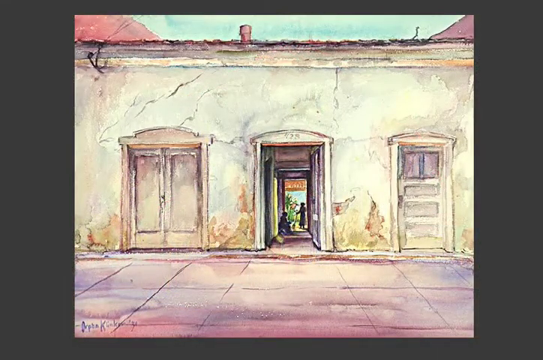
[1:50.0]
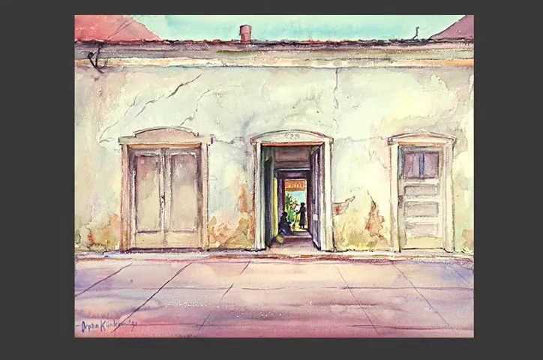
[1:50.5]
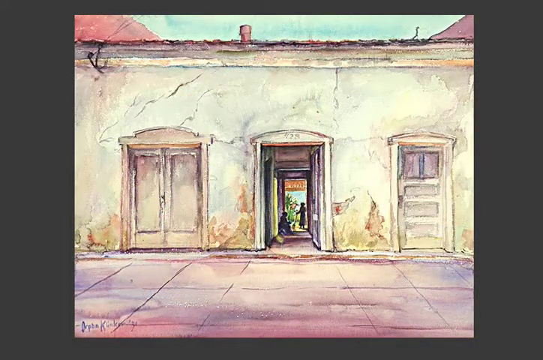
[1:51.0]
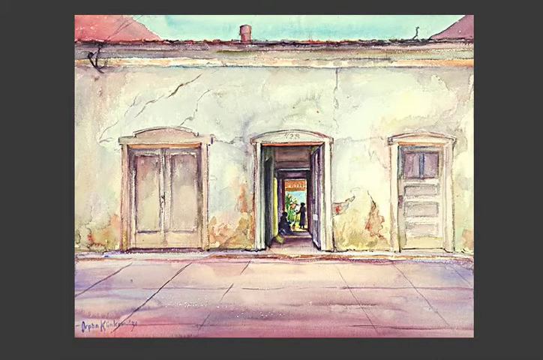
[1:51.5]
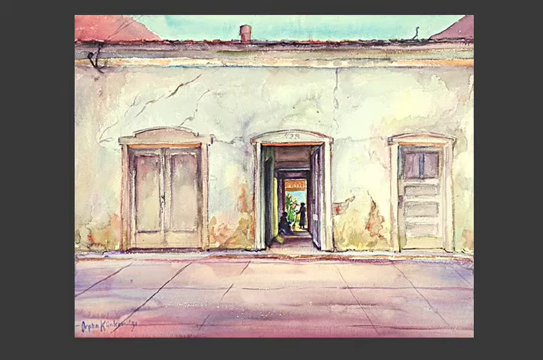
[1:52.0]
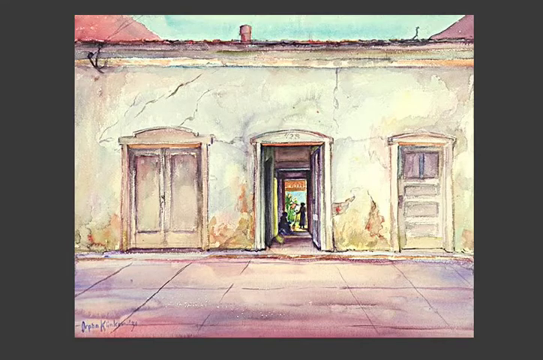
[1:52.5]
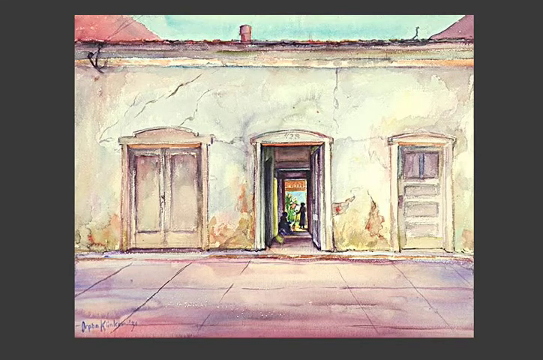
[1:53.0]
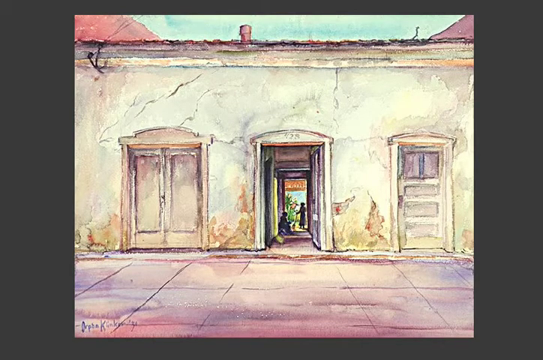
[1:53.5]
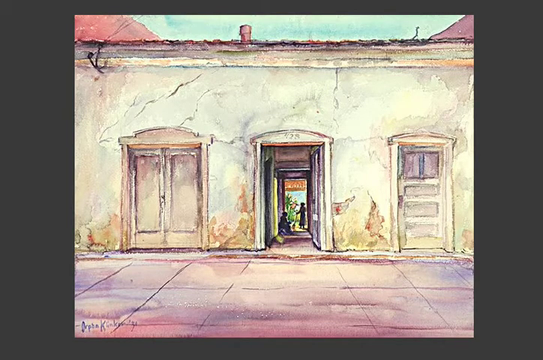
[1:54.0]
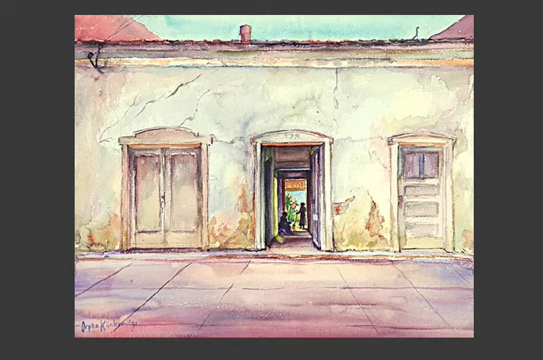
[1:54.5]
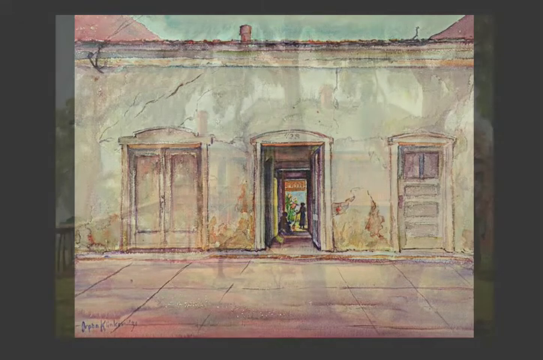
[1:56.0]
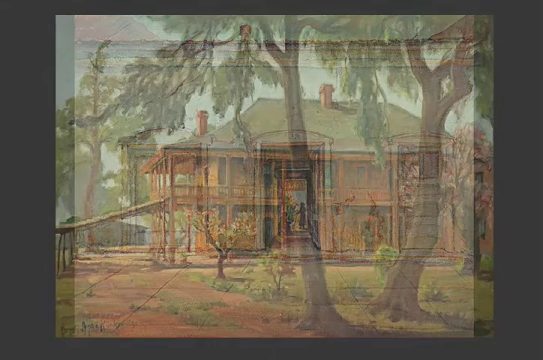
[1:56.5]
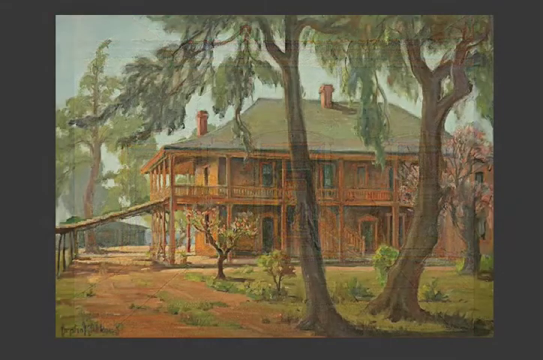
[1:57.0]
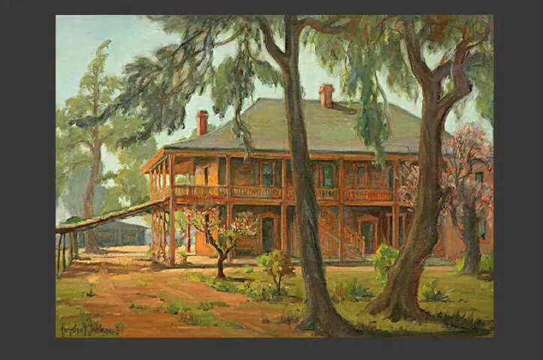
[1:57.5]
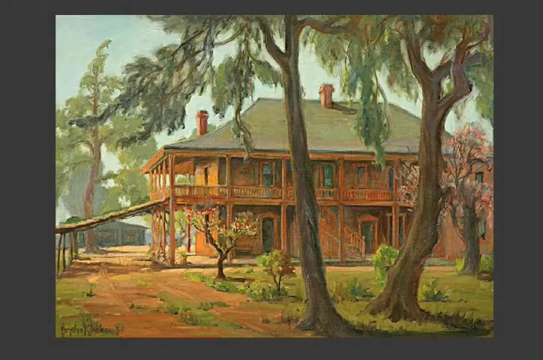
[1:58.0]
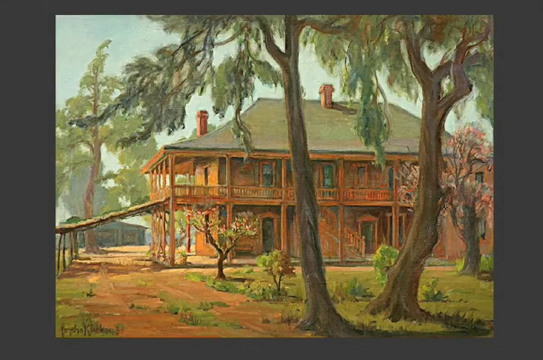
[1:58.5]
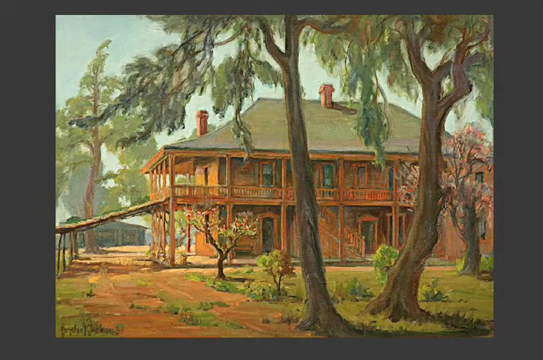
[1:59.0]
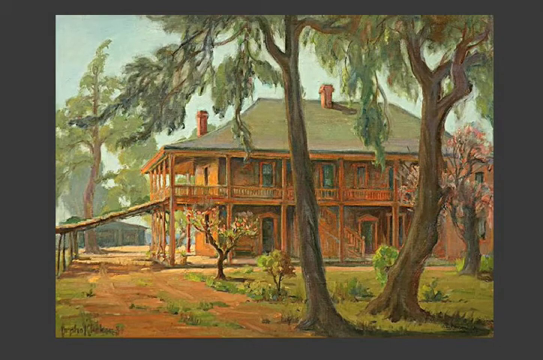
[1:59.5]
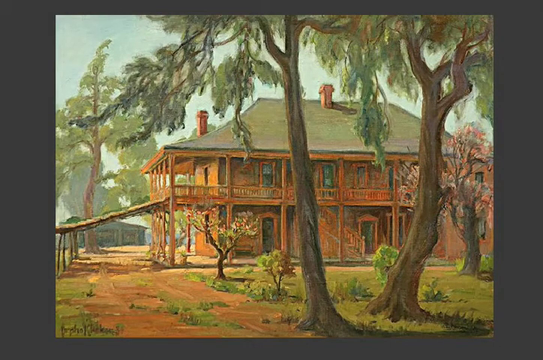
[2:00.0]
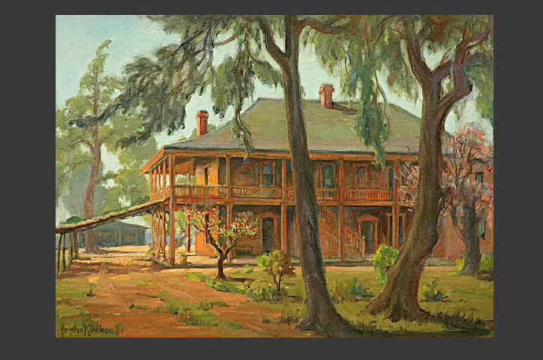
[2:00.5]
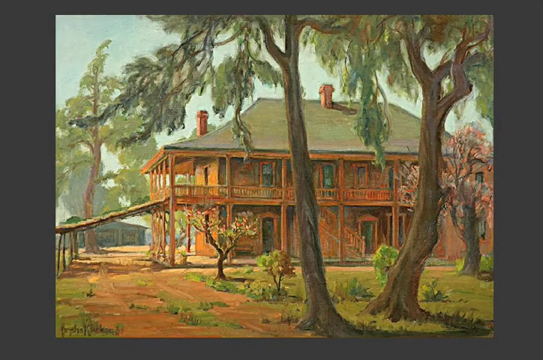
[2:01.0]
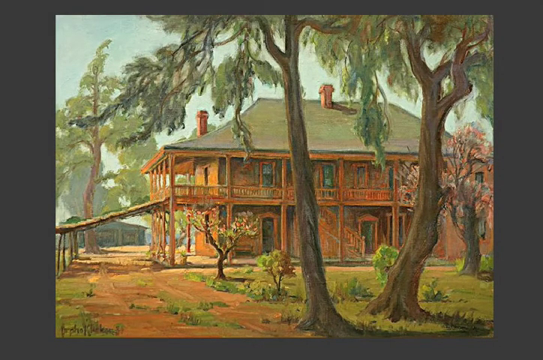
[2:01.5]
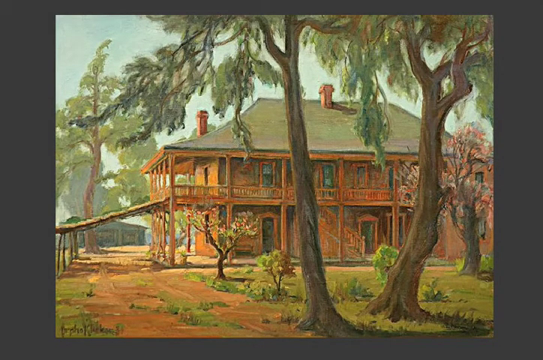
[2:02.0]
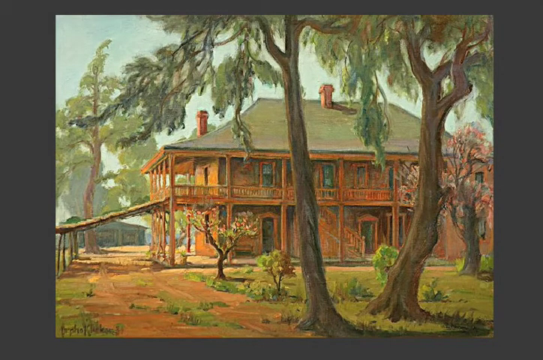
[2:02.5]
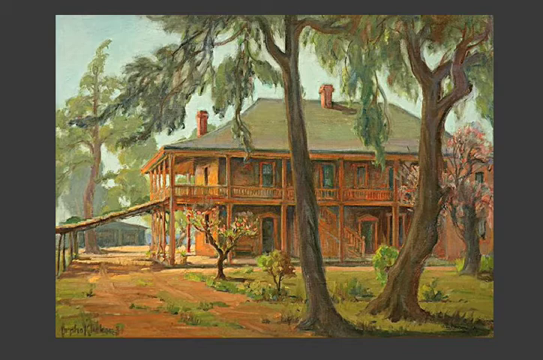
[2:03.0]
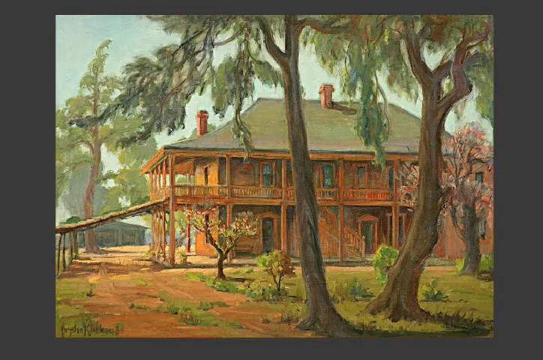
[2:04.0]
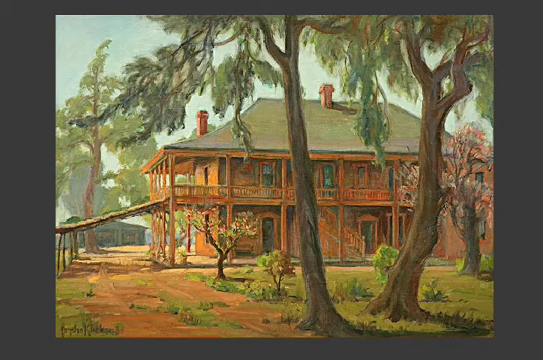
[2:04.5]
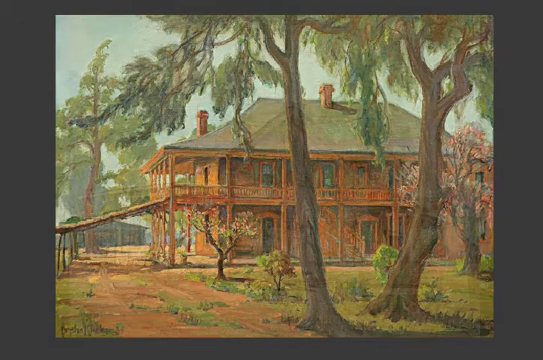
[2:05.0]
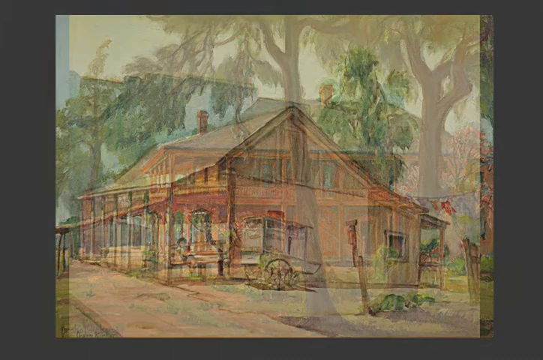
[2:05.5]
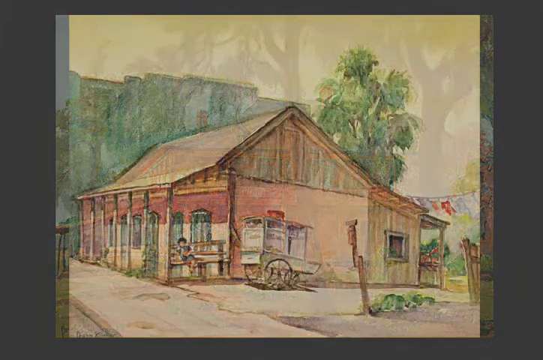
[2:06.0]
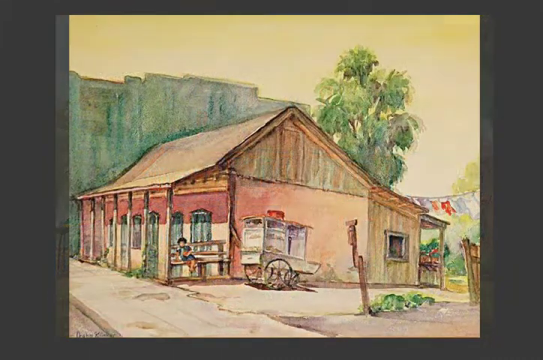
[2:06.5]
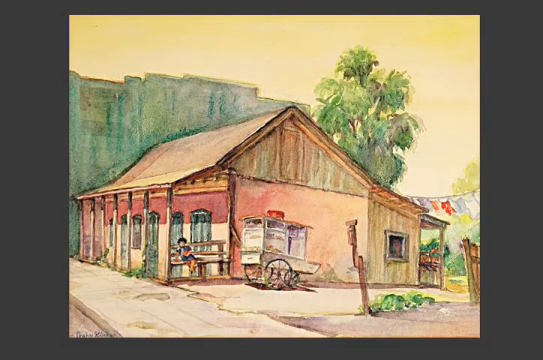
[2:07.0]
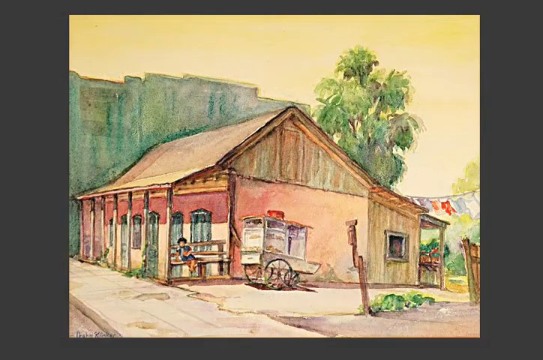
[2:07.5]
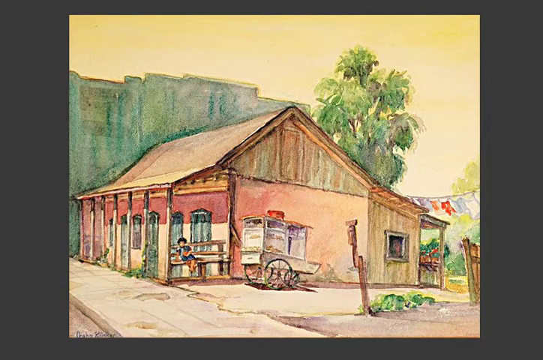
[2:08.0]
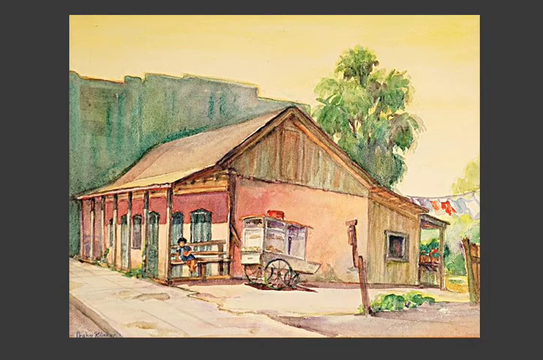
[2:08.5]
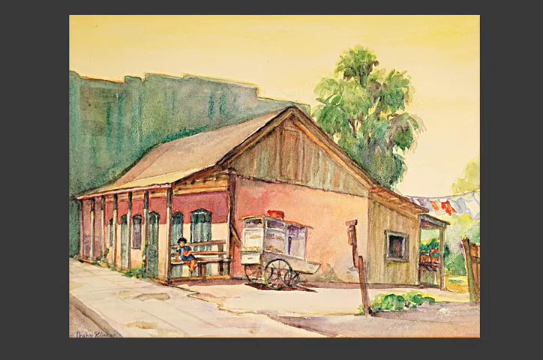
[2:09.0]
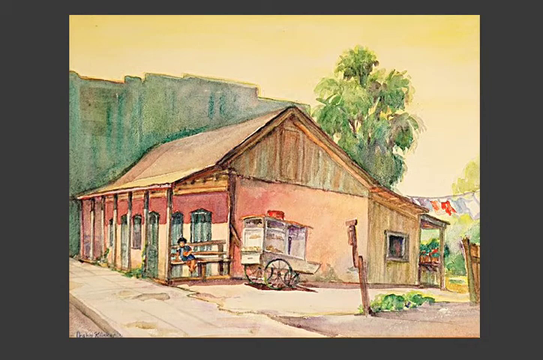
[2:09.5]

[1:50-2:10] Over a gray background, the image switches to a portrait of a giant brown mansion on a plot of land with four or five trees all over the place, long wispy trees that look like they have Spanish moss or are willows. The mansion is brown with a green rooftop. Two chimneys are visible, and it seems to have an awning and a porch type area. There are ten windows facing this direction and side, and the upper floor of the building has a wraparound balcony. This picture is replaced with a painting, which looks like watercolor, of another building. This one is much smaller, with seven columns in the front for the porch, where there seems to be a bench with someone sitting on it. The building itself is beige and red. In the background there seems to be a tree and a larger green building behind it. To the right there seem to be clothes hanging in the back of the house, and on the side there seems to be some sort of white carriage with a red top.